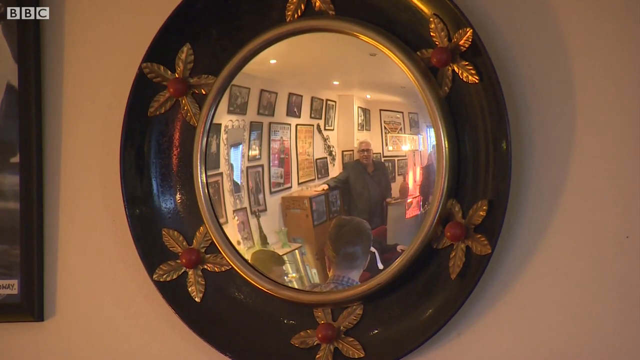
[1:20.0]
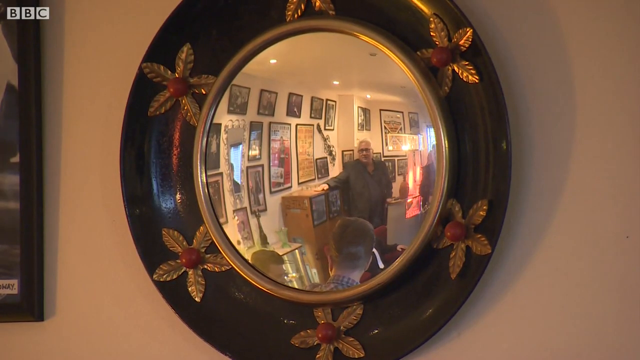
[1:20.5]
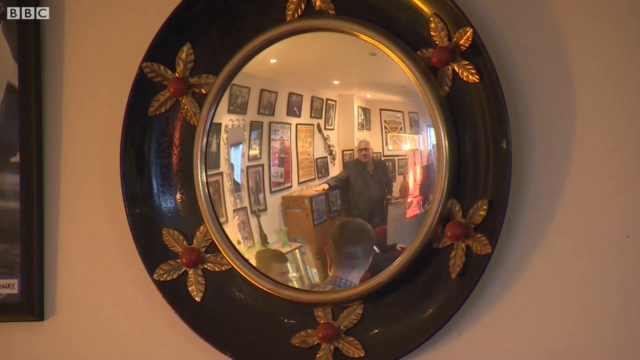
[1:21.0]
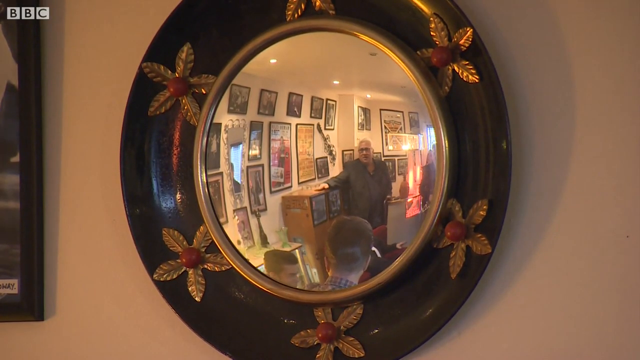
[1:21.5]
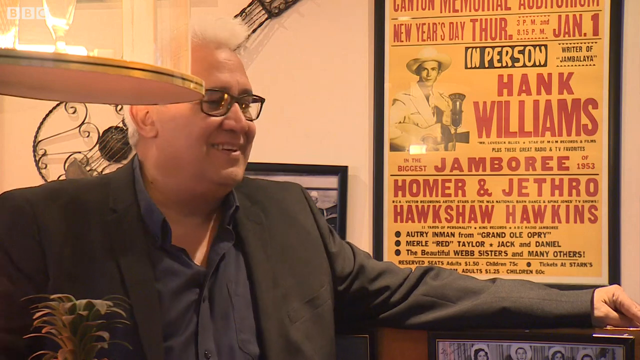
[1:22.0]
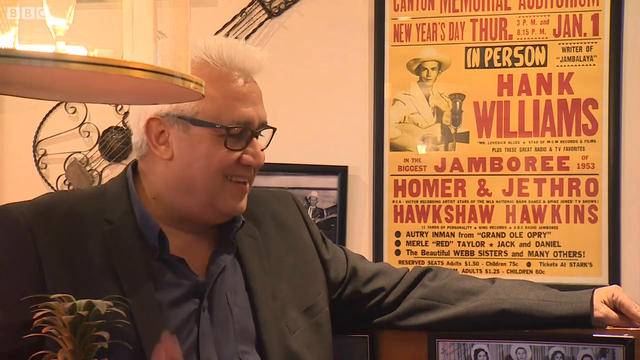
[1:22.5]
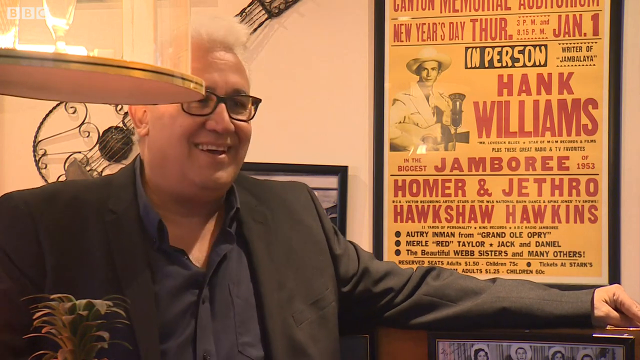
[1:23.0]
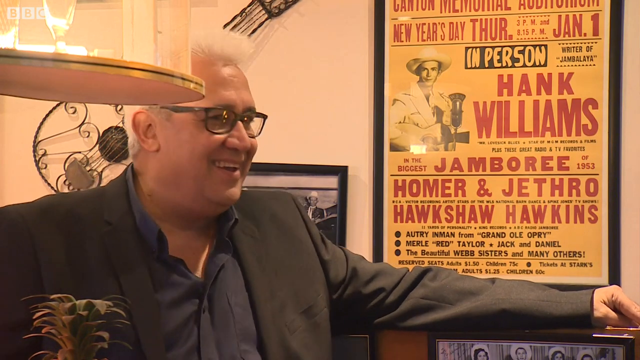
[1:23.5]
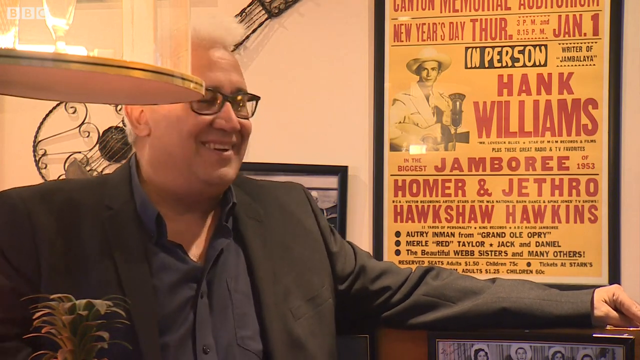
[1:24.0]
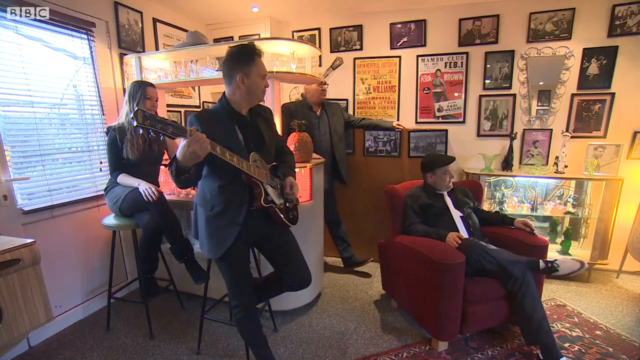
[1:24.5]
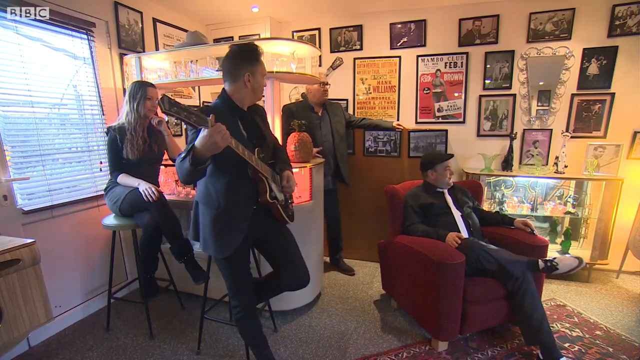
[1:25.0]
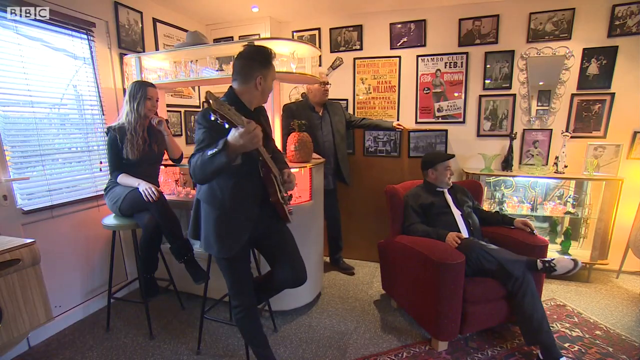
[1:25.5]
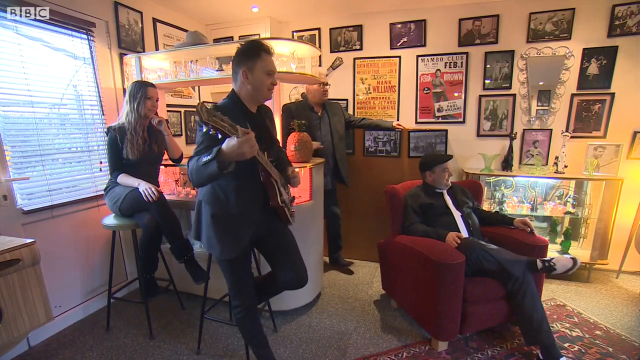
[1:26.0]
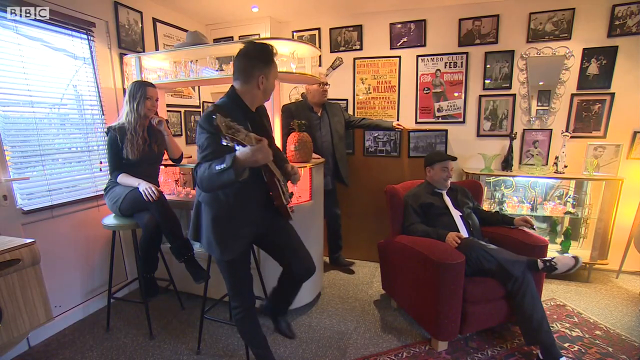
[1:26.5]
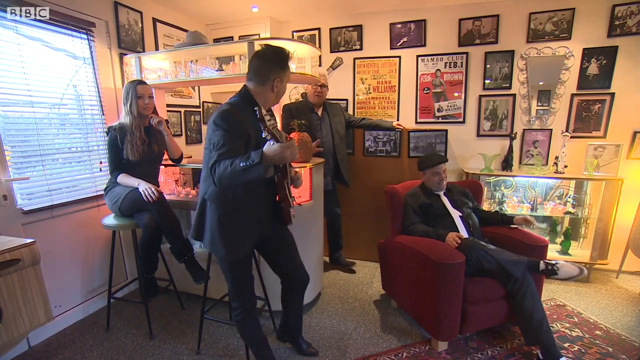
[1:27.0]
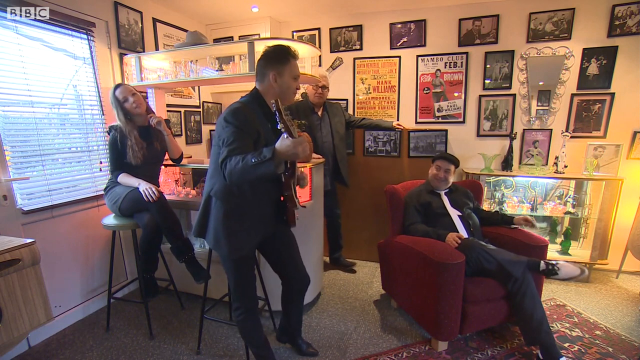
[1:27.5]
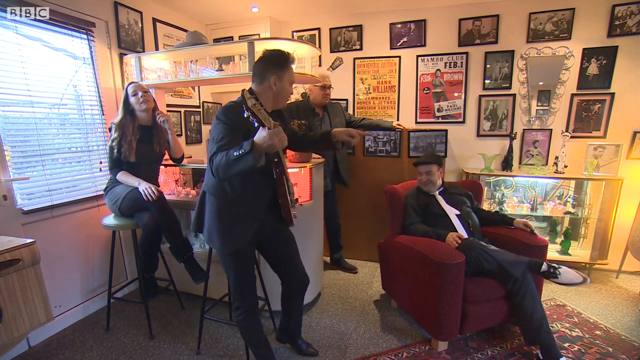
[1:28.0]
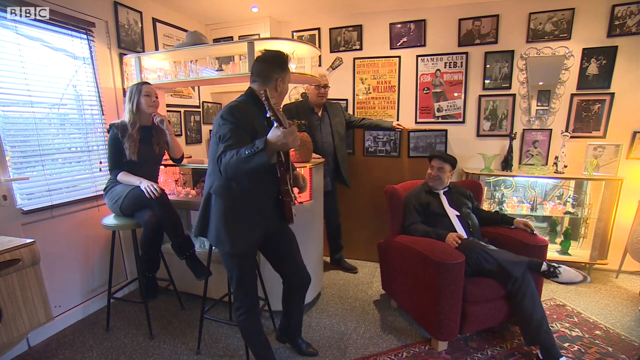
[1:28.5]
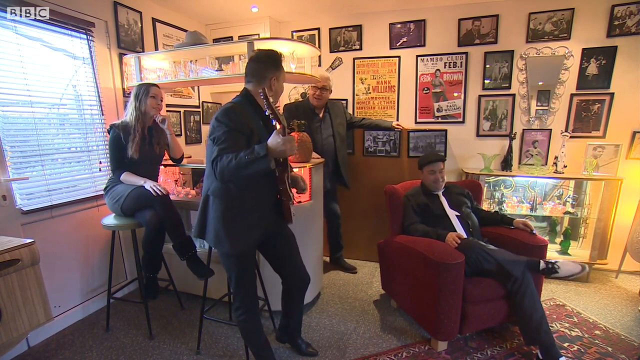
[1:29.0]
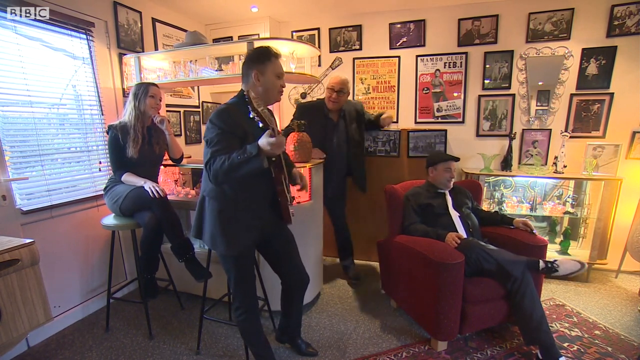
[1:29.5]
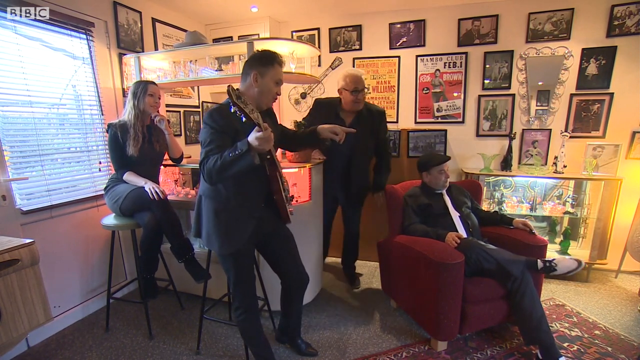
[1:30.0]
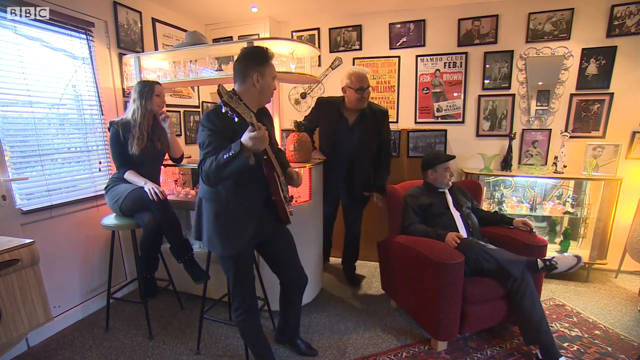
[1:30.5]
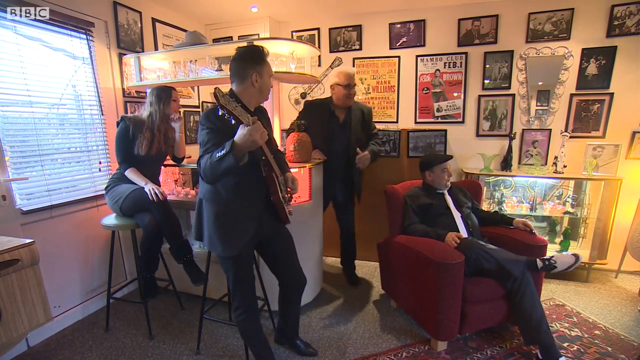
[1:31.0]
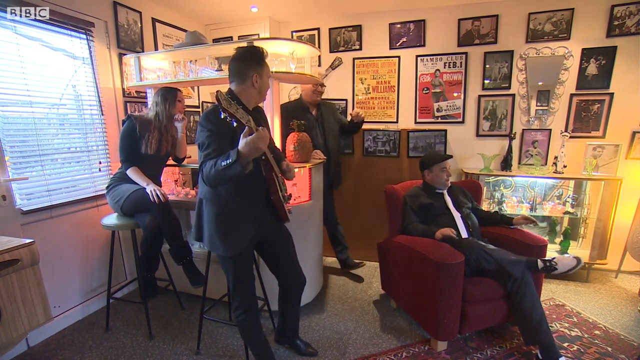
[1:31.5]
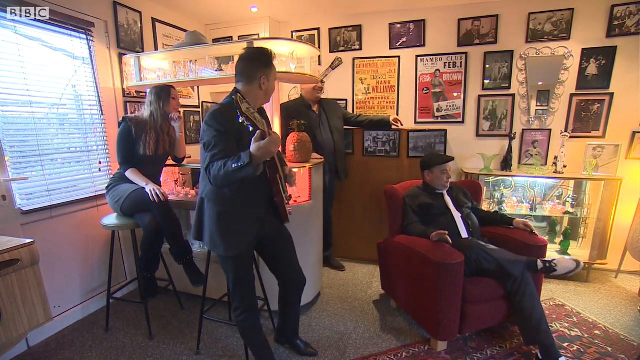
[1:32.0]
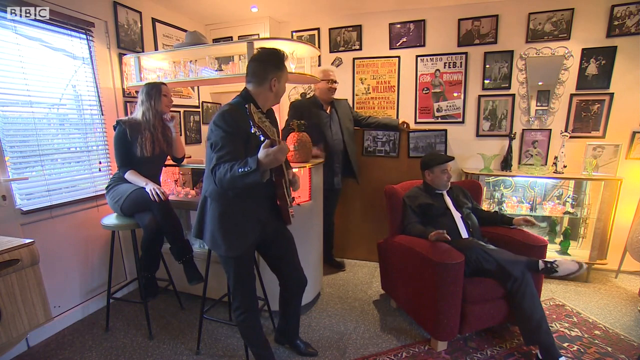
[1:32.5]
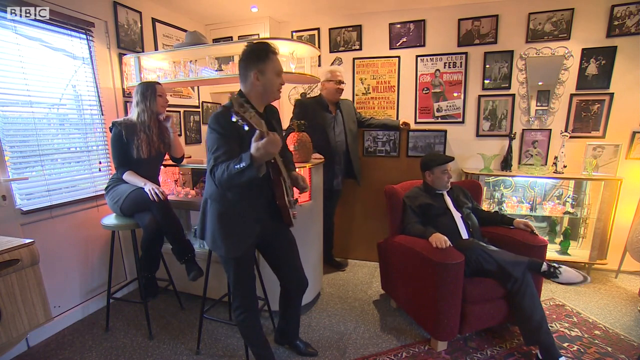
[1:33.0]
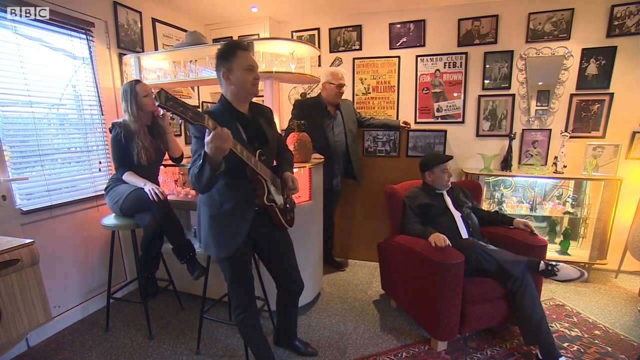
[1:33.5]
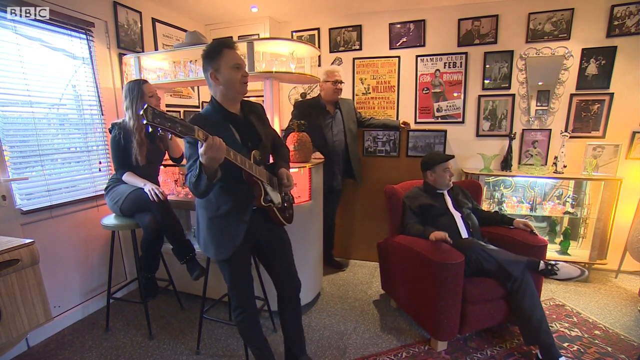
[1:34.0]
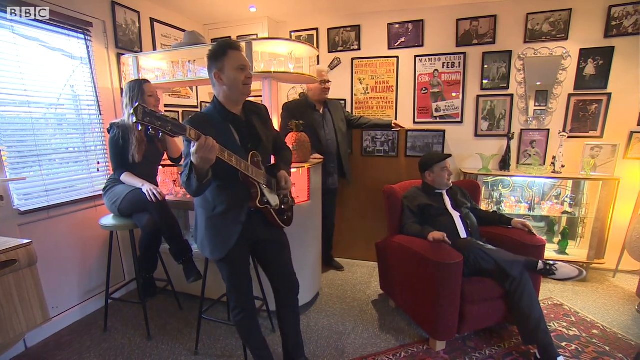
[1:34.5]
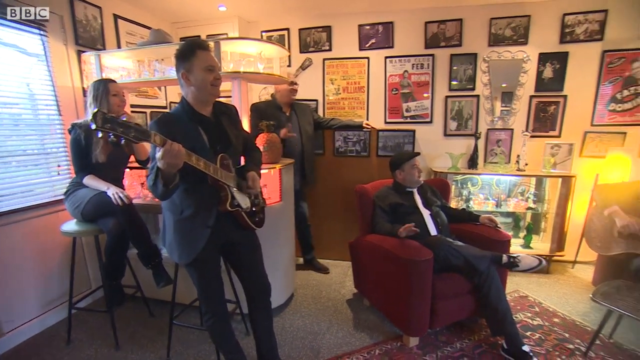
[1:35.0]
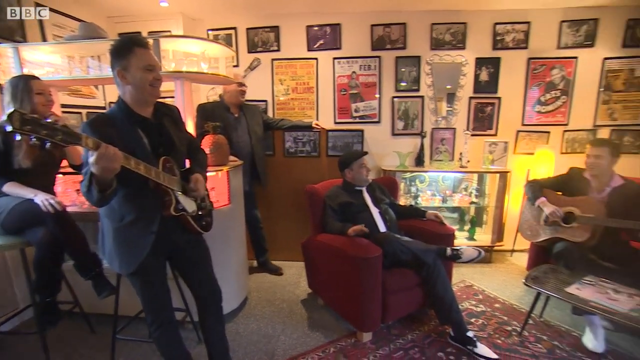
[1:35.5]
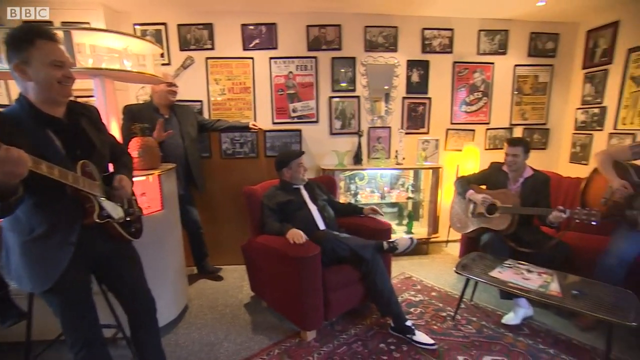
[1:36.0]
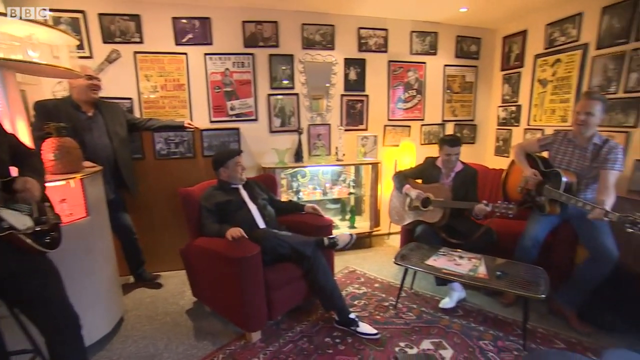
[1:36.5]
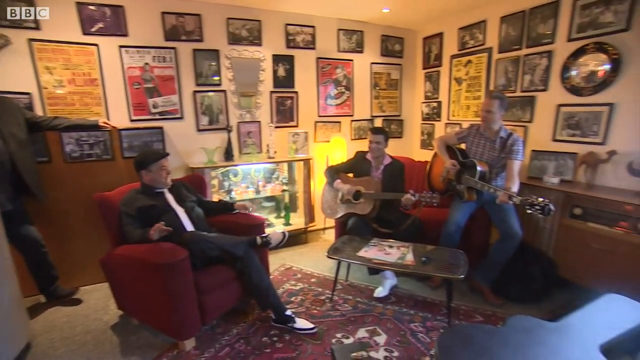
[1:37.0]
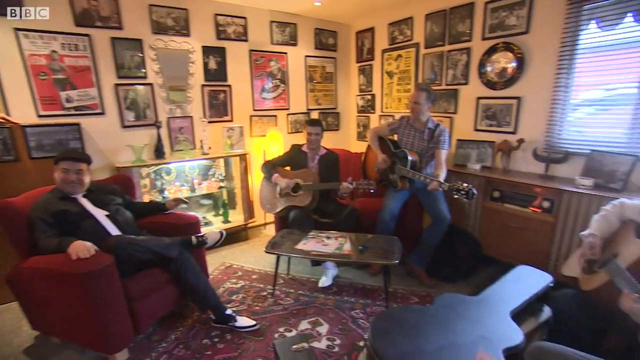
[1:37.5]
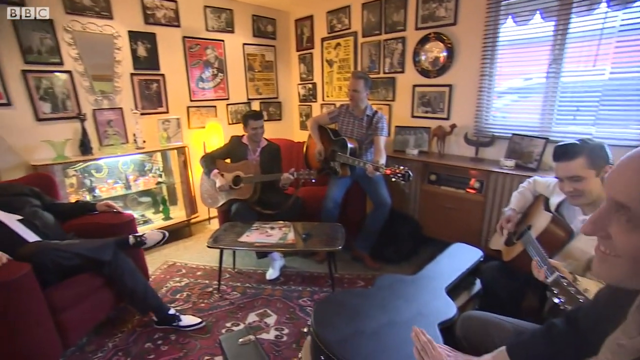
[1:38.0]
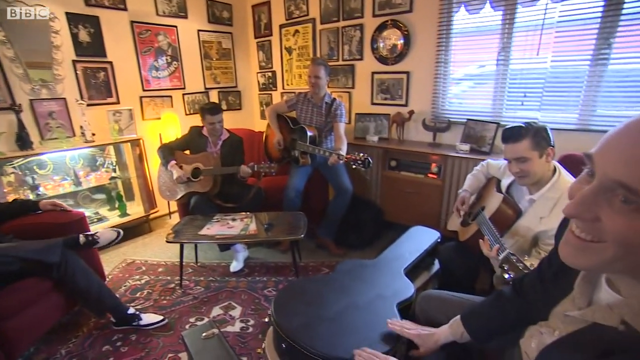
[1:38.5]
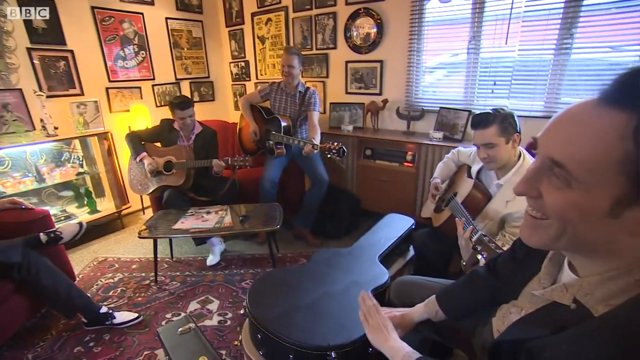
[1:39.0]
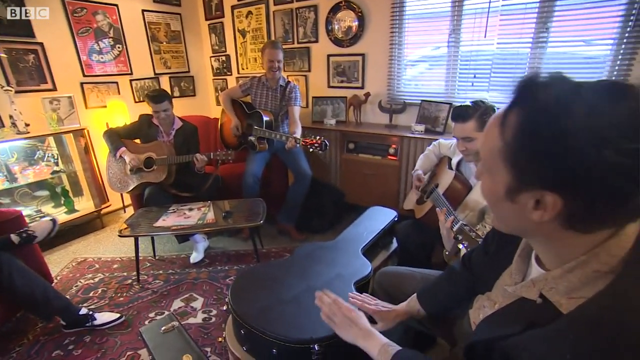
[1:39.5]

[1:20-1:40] The shot looks into a mirror, whose reflection shows a man playing in a music studio. A man standing by the wall is kind of grooving along to the music. The video then shows the man playing the guitar, his hand strumming the strings as he looks and points out into the studio and talks to the people in the room. The camera pans over to show several people playing guitars, their hands moving up and down as they strum. At the far right, a man taps on top of a guitar case with both hands to make a percussion sound as if playing drums, his right and left hands moving independently, one up and then one down.